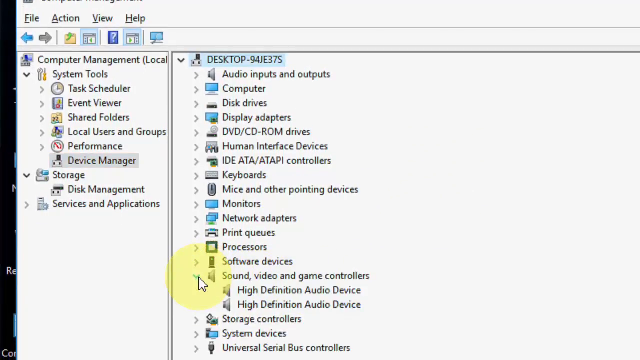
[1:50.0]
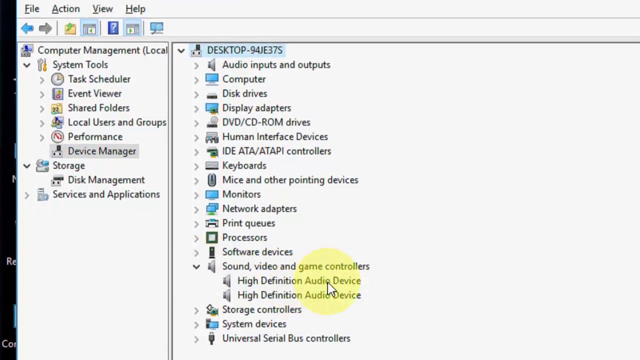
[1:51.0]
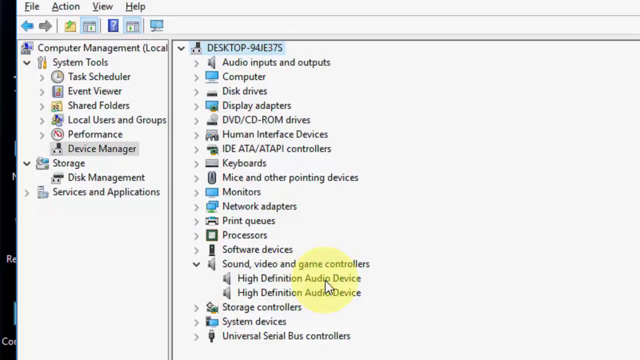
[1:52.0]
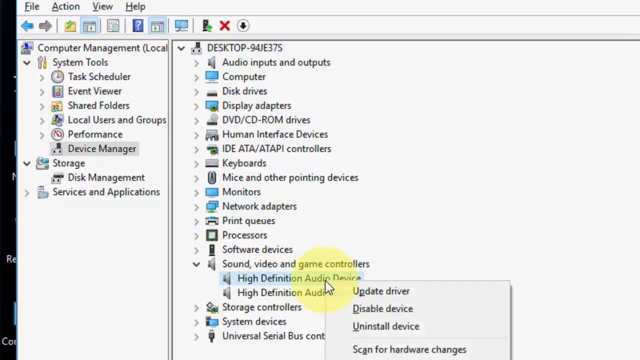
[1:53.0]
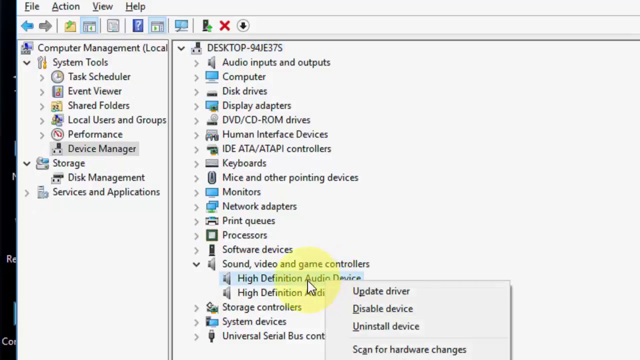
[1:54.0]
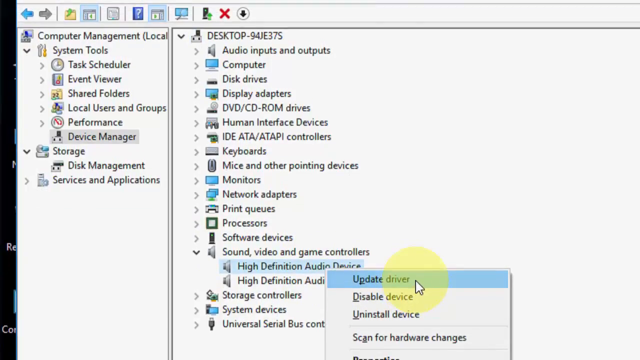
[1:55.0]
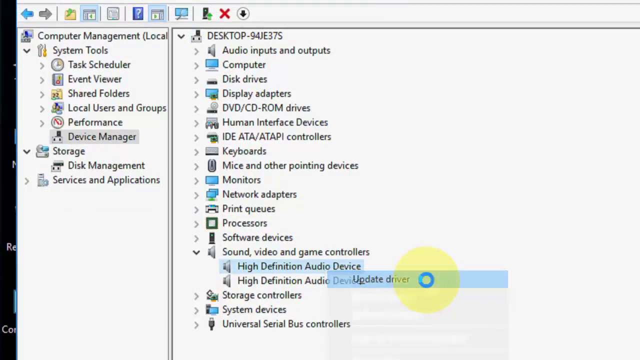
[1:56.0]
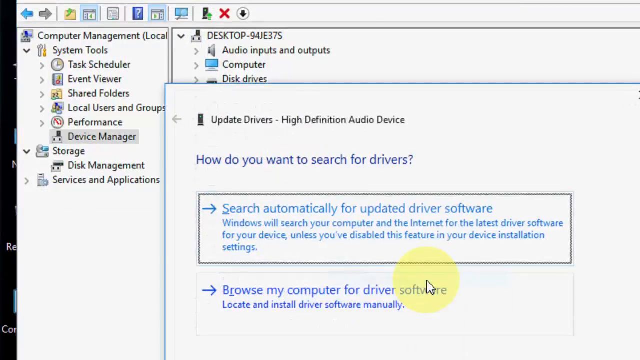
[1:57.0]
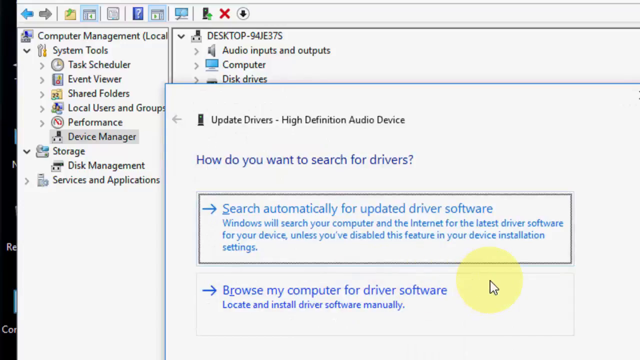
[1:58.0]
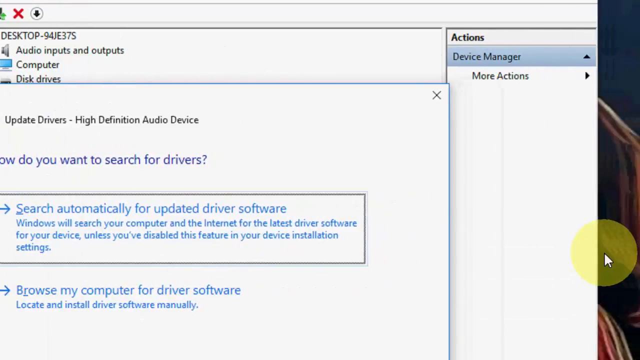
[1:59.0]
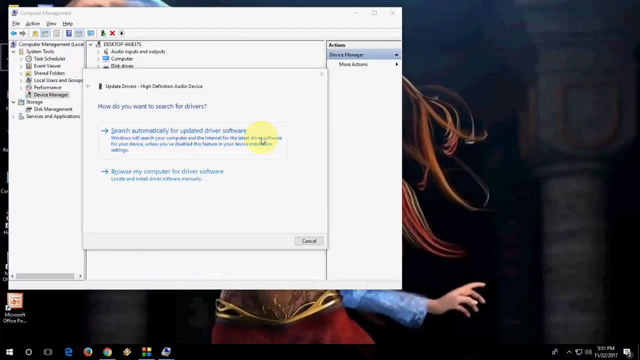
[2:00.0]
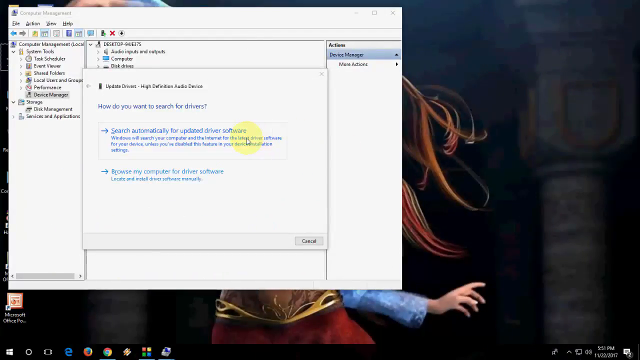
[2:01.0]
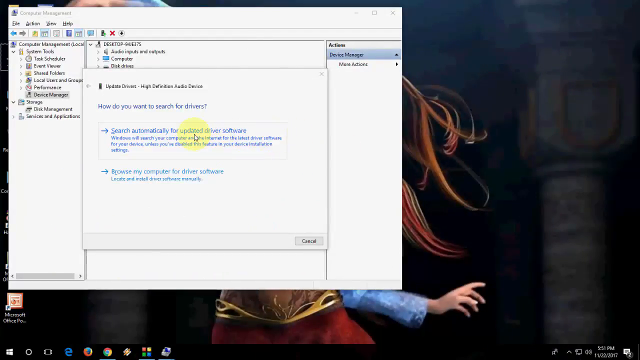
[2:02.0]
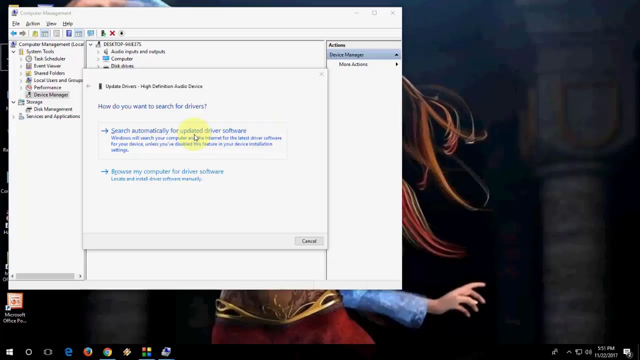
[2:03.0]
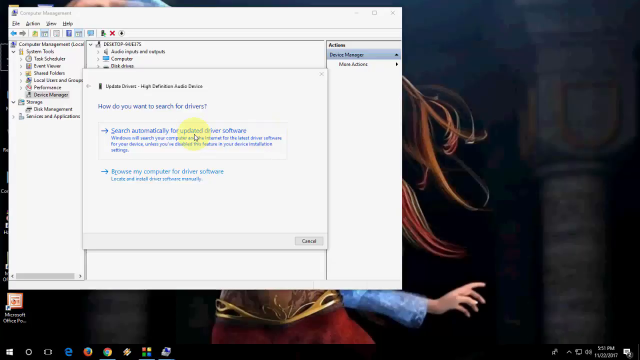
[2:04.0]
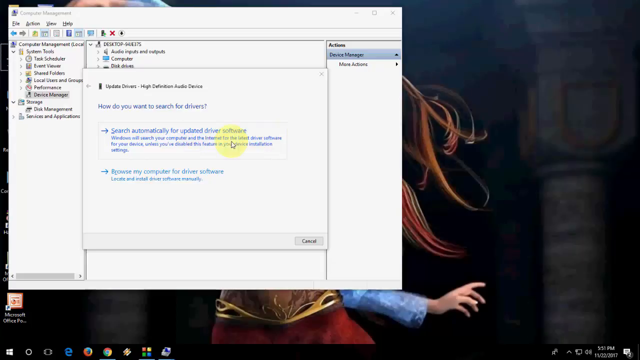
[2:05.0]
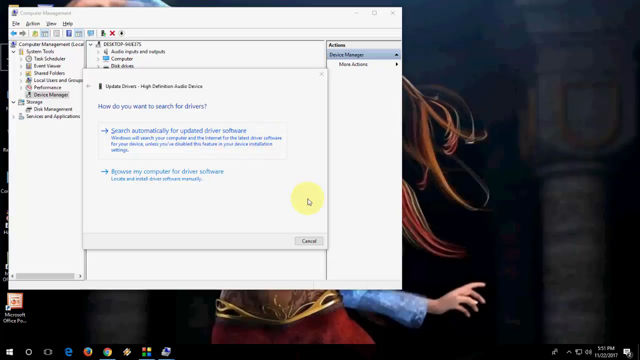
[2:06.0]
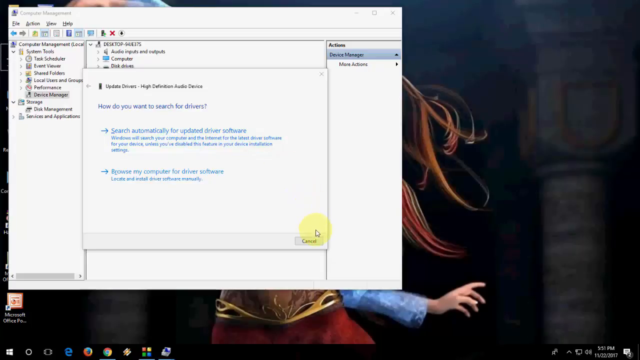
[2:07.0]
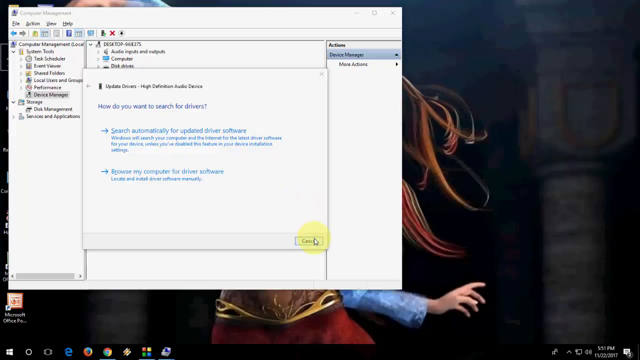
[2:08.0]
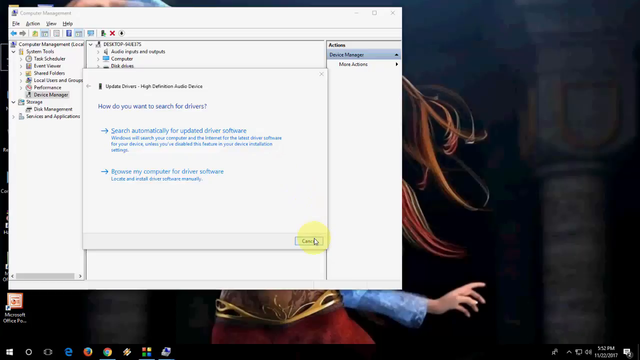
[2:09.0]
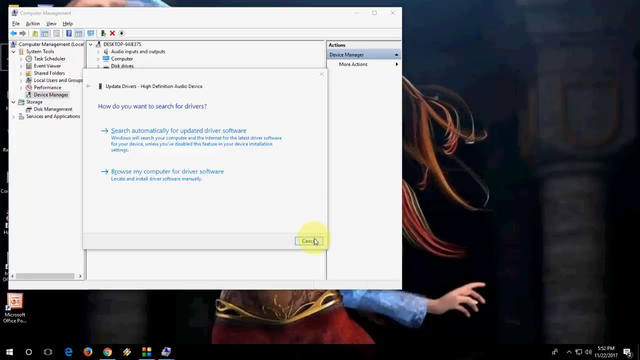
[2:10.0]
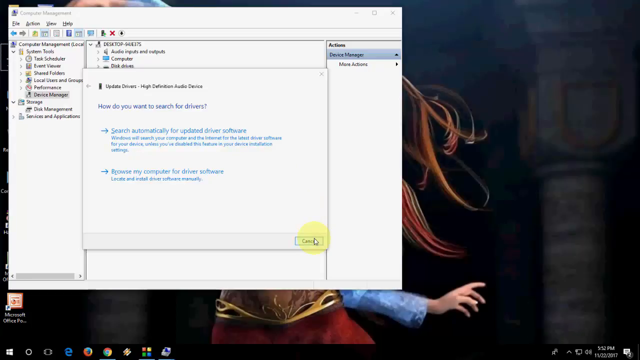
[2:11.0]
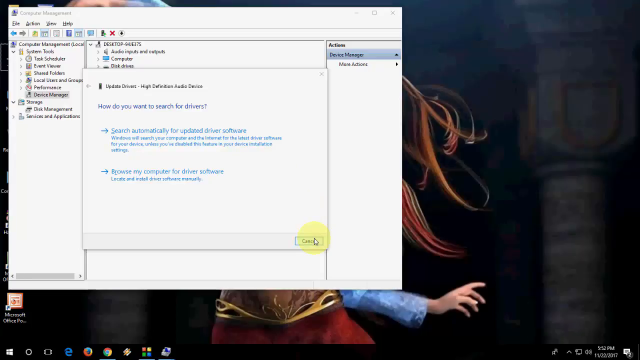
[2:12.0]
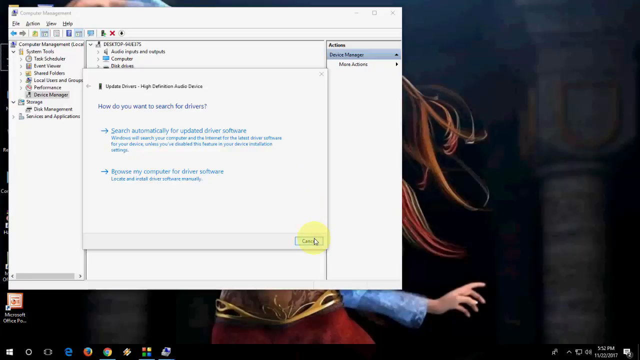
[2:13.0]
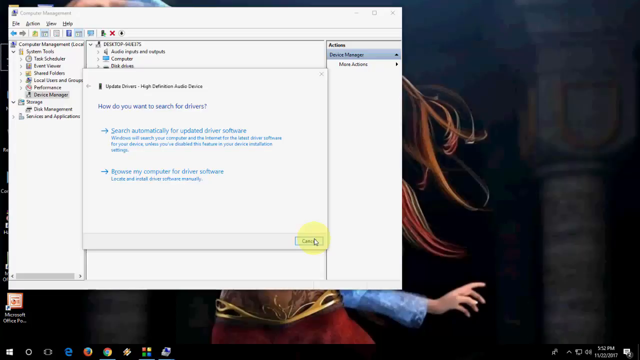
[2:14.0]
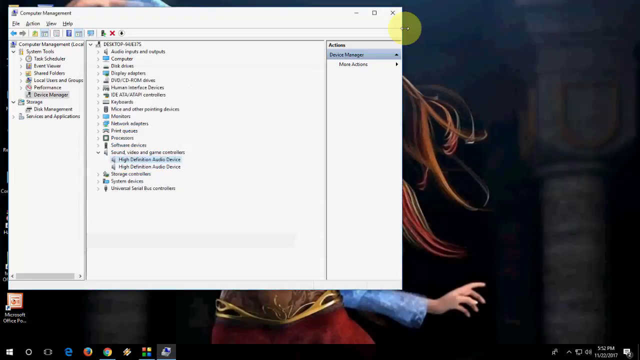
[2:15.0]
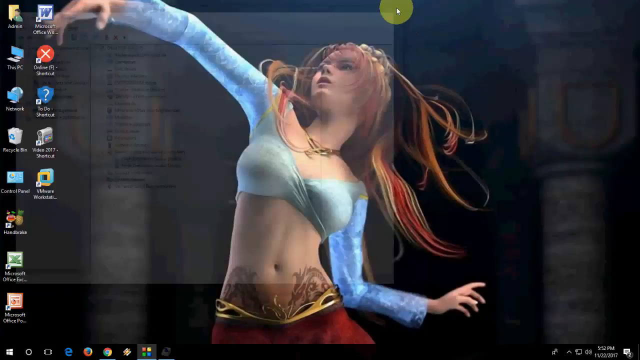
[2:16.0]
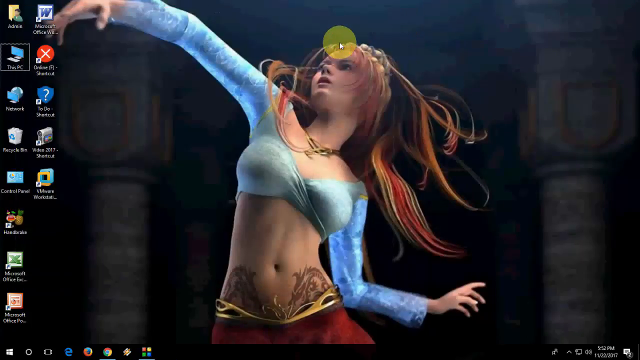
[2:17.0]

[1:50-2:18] A window is open with File, Action, View and Help listed at the top, and Computer Management, System Tools, Task Scheduler and Device Manager listed on the left. The person is in Device Manager, with the mouse hovering over the sound, video and graphics card controller settings. They highlight the first option, "High Definition Audio", and go to update the driver, highlighting the option to search the internet and clicking Next. They then close that window, and the view goes back to a picture of the desktop one more time.